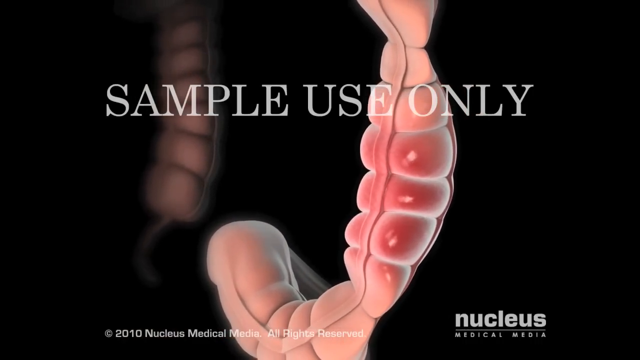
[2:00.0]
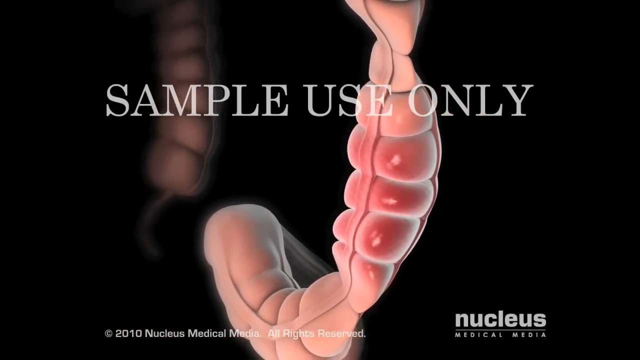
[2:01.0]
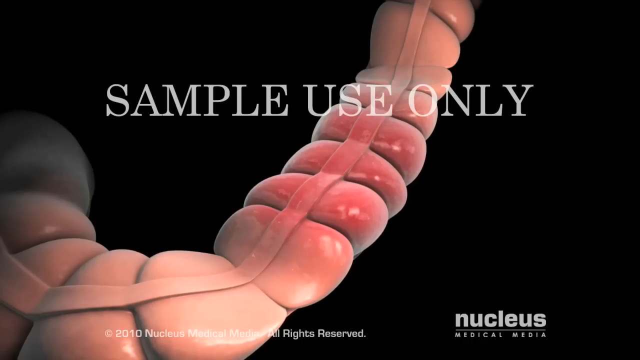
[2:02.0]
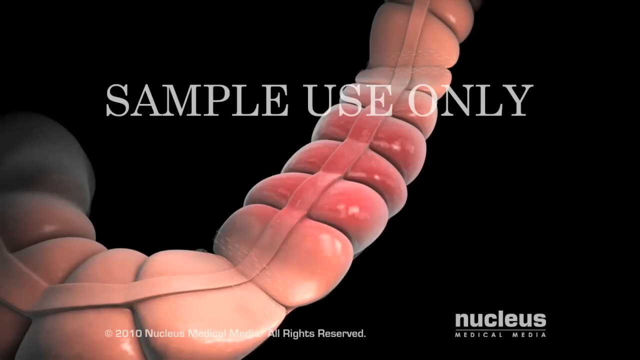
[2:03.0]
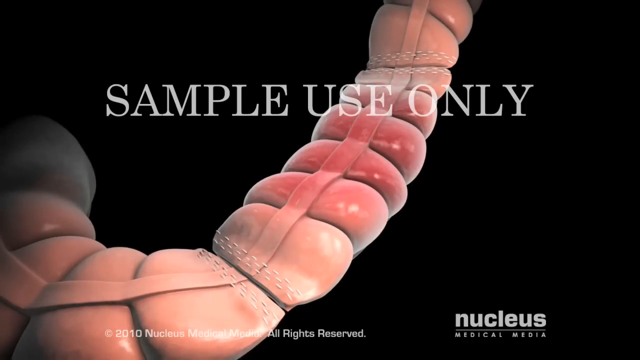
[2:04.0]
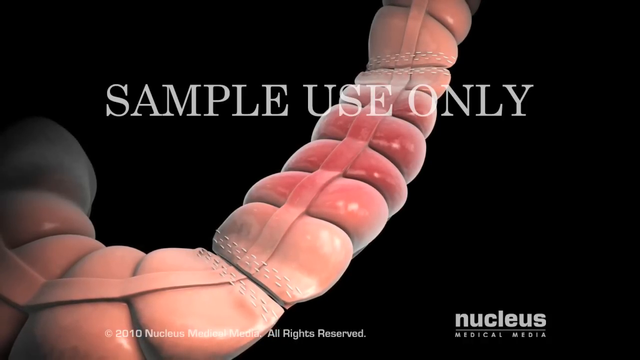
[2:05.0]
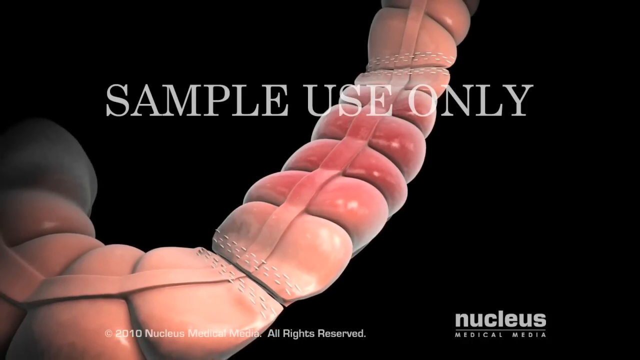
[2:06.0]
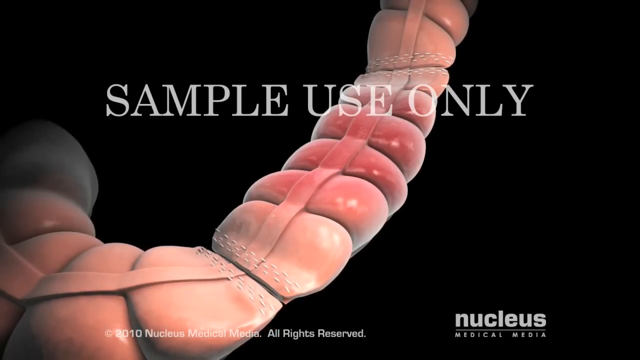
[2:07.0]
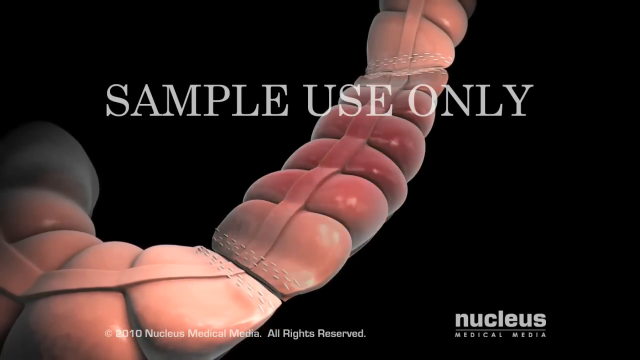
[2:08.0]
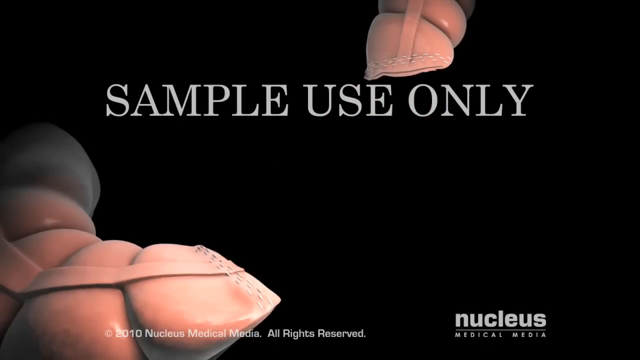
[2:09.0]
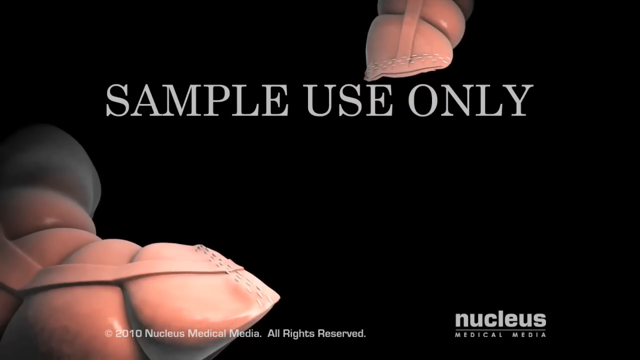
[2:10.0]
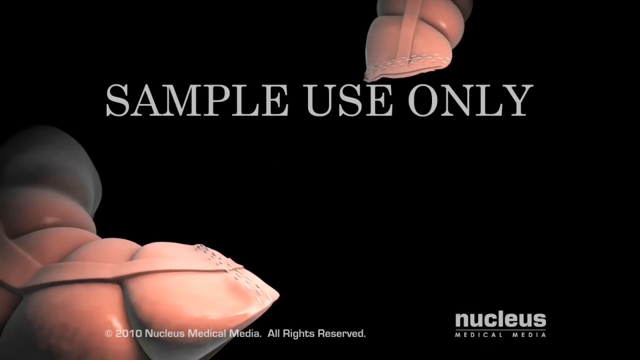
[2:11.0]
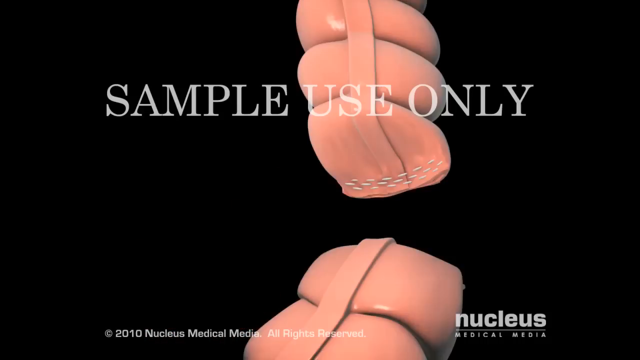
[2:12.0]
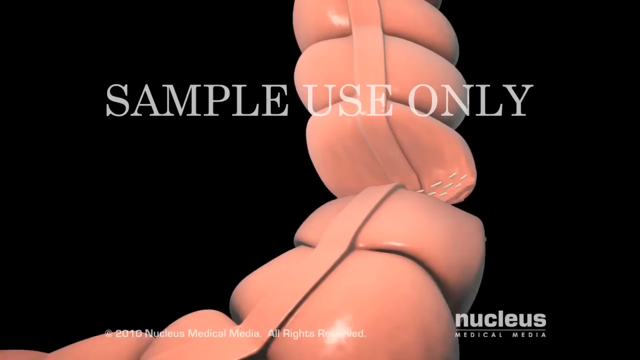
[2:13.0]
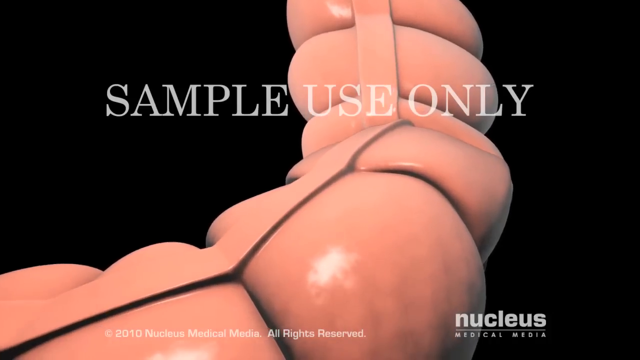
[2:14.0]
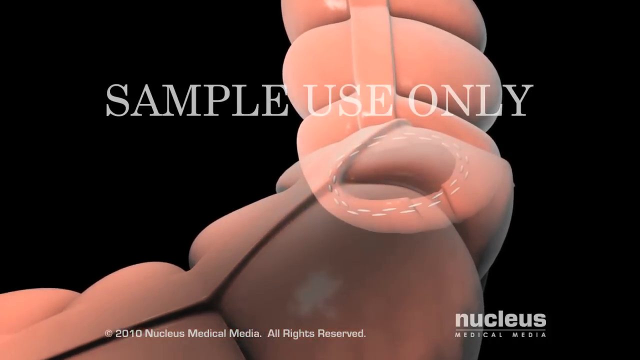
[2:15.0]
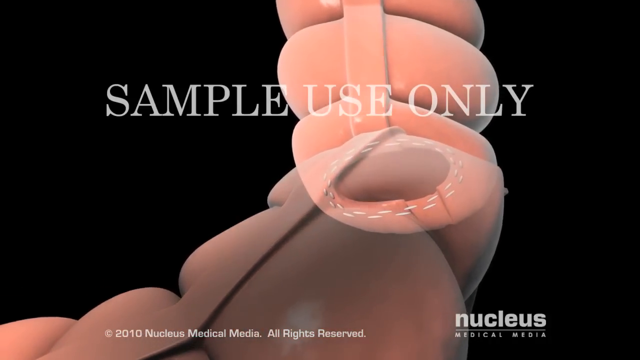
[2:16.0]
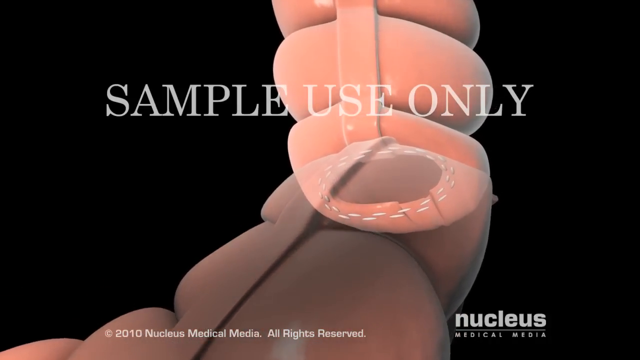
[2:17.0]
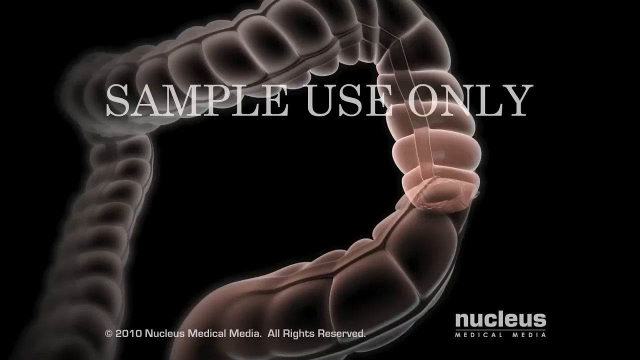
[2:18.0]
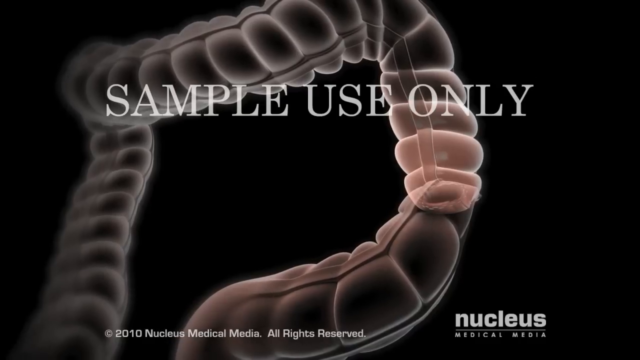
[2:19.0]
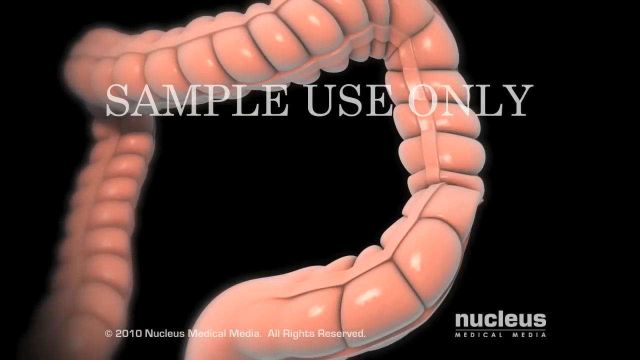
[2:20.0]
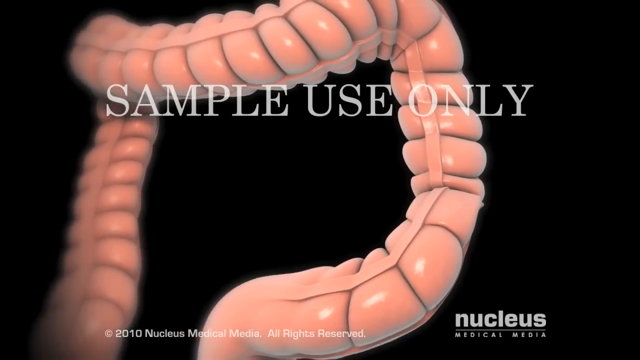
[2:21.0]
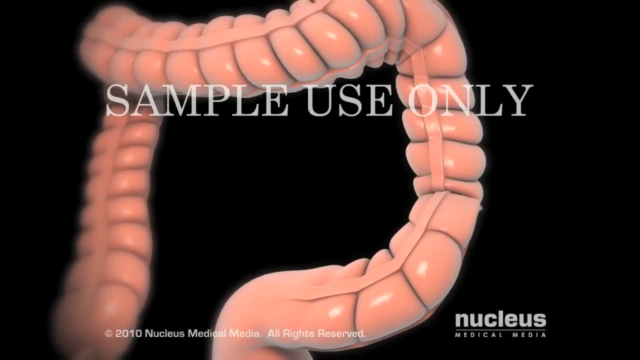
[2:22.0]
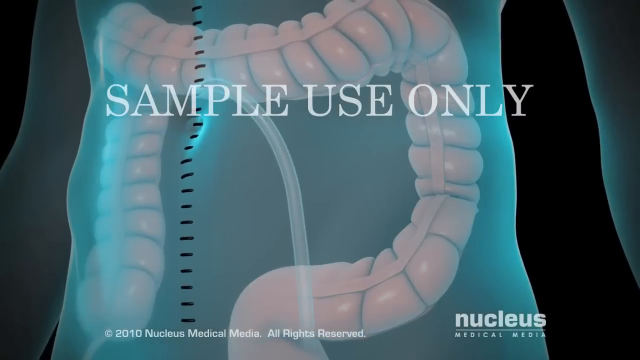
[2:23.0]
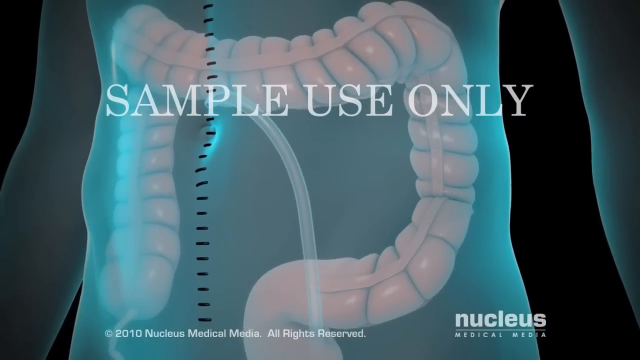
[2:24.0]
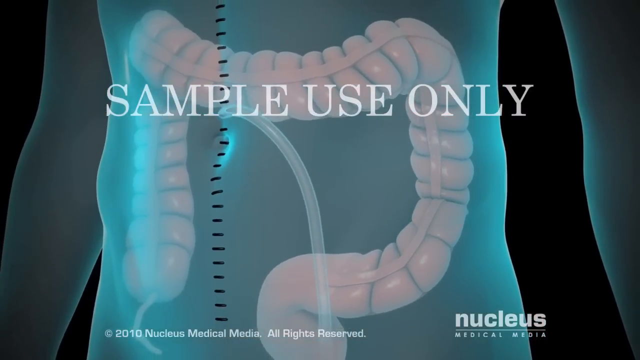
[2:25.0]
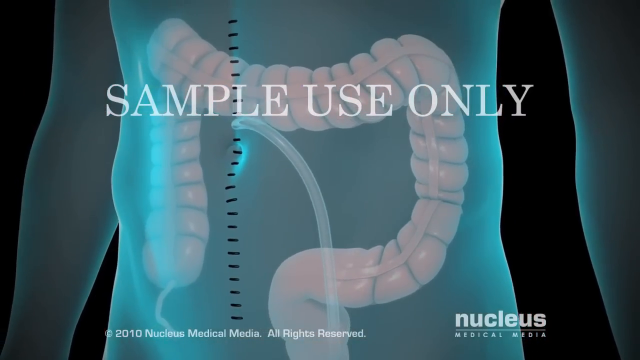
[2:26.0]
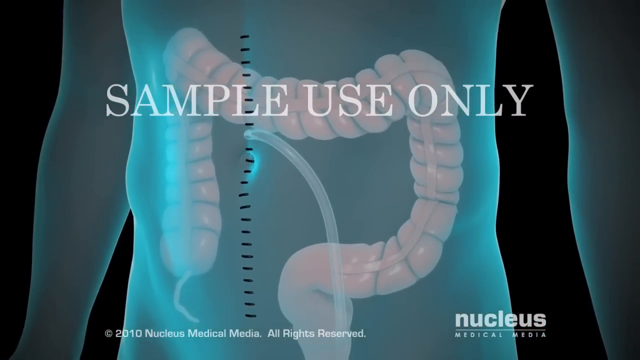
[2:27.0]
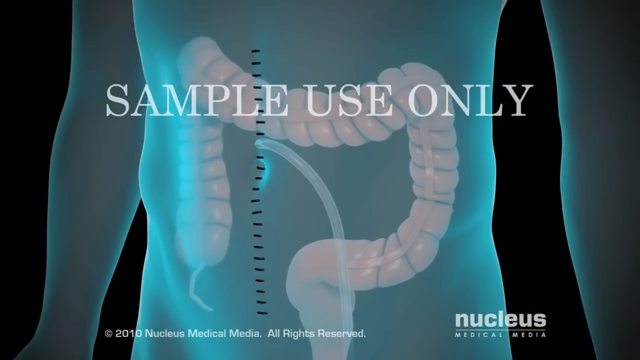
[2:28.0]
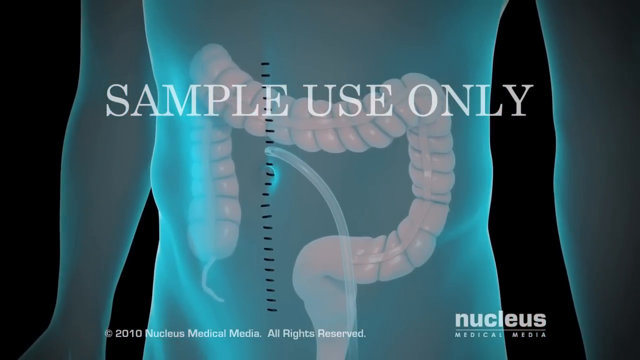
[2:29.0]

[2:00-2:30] "Sample use only" appears in all caps in white print. A model of a large intestine has one section that is very red while the rest of the intestine is peach colored, apparently marking the part to be removed. The intestine is cut in two places, and that section disappears. The two cut ends then come together and are reattached. Where the two ends meet looks a little different from the smooth rest of the intestine: a little concentrated and condensed, not as puffy.